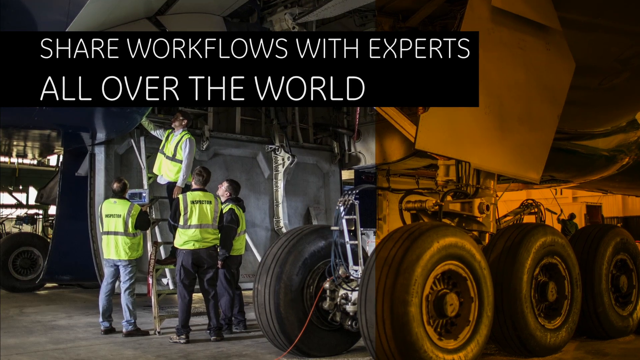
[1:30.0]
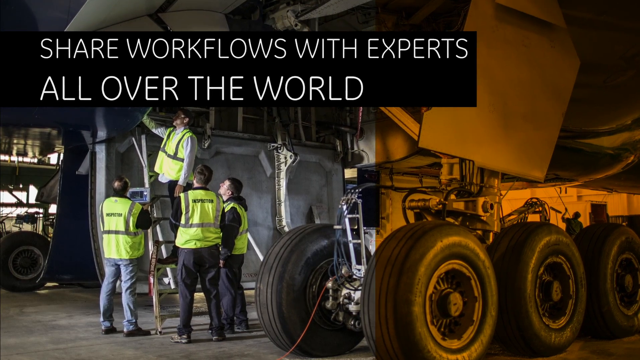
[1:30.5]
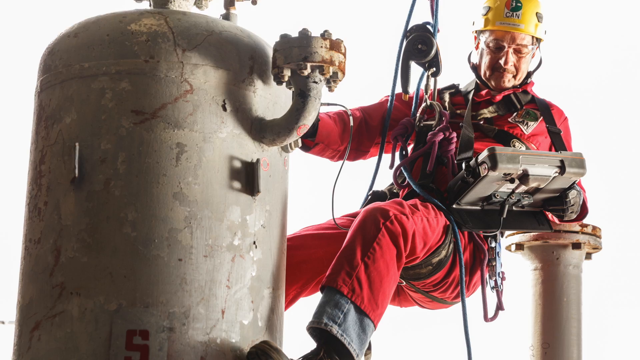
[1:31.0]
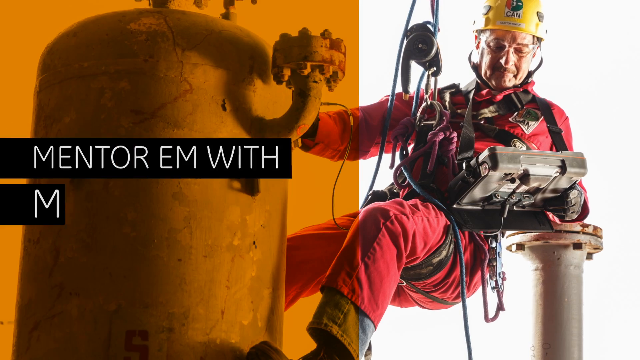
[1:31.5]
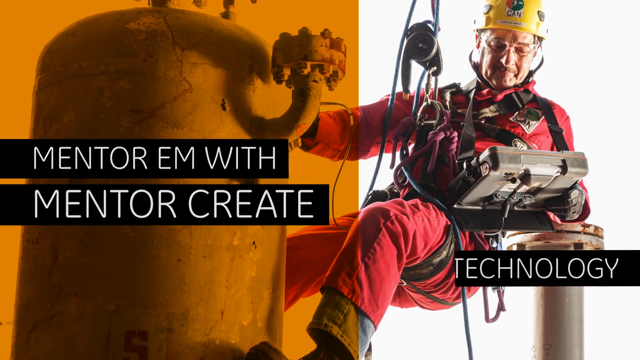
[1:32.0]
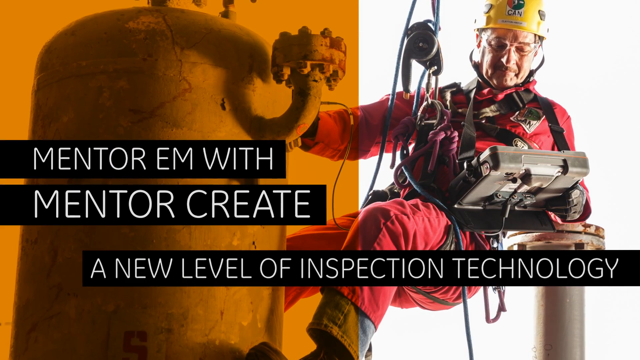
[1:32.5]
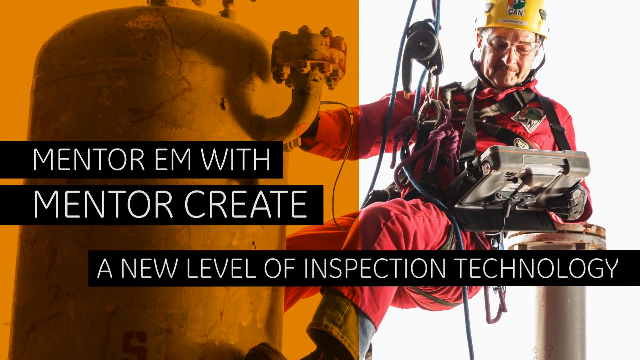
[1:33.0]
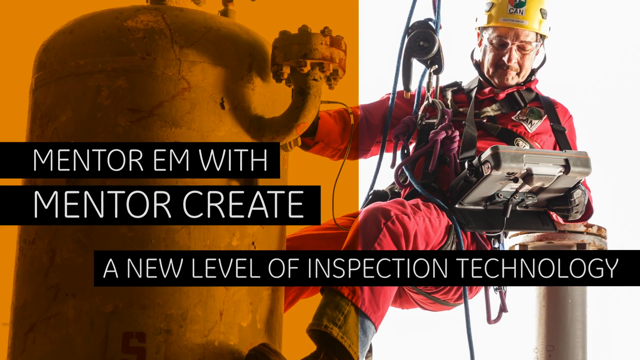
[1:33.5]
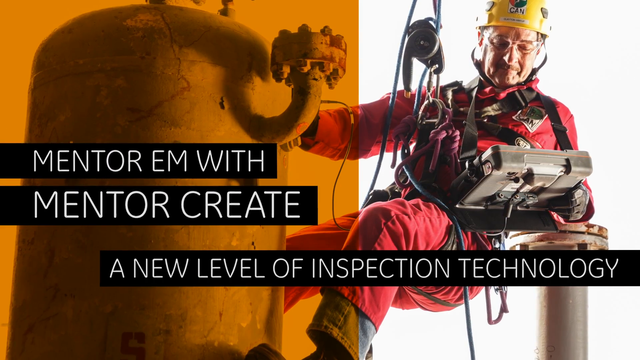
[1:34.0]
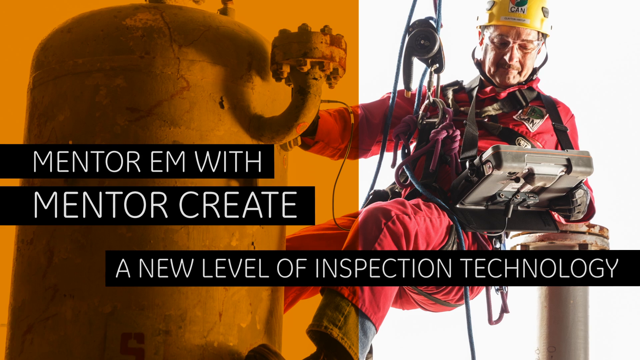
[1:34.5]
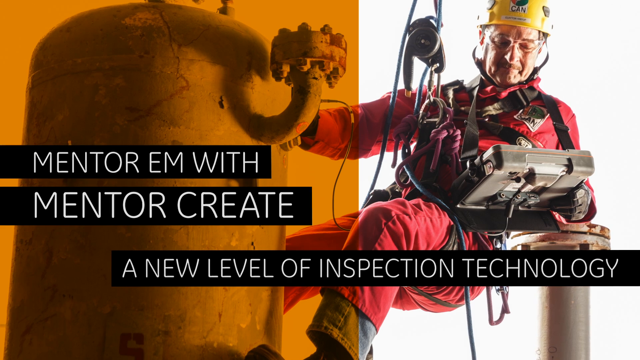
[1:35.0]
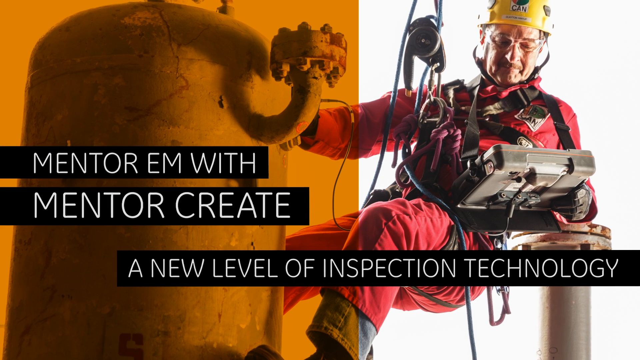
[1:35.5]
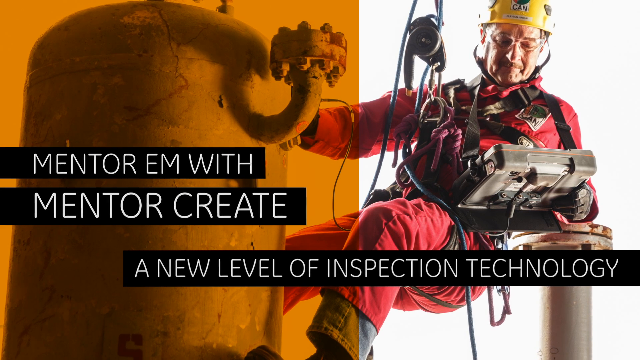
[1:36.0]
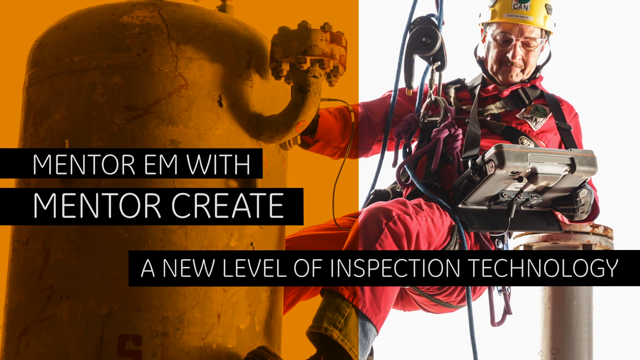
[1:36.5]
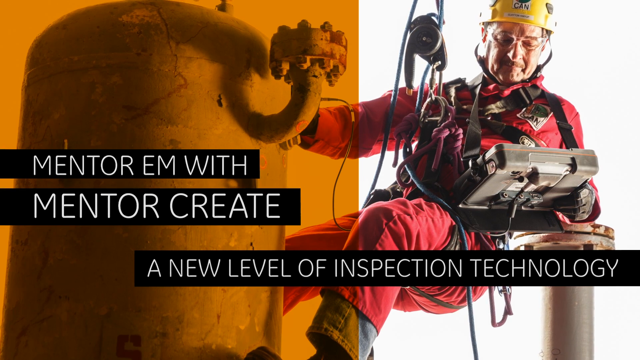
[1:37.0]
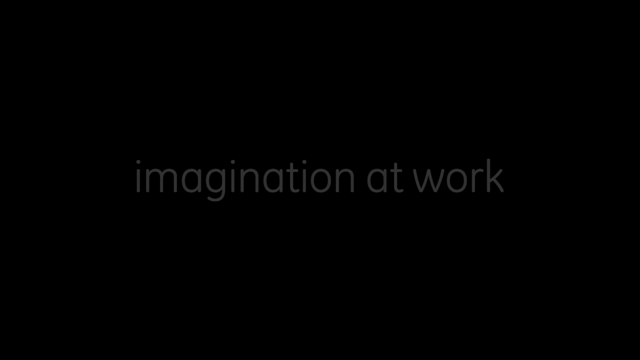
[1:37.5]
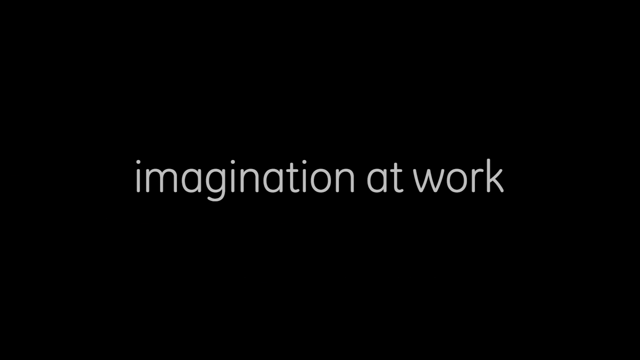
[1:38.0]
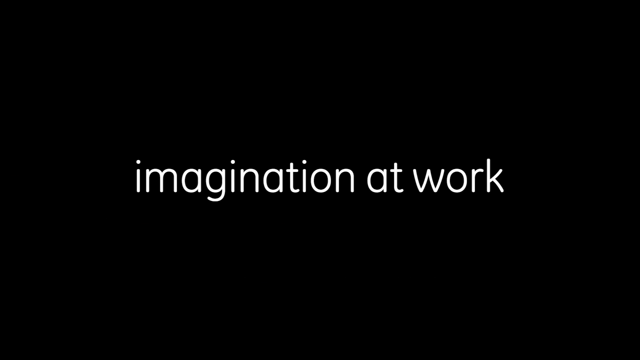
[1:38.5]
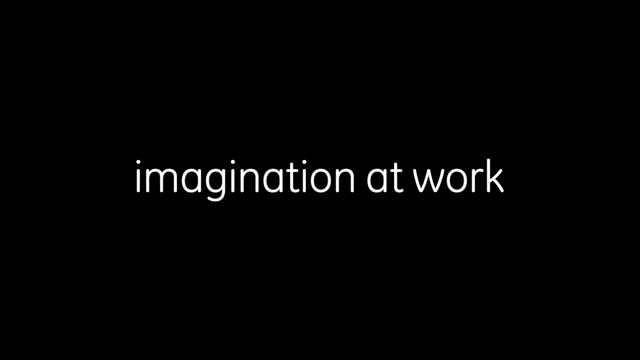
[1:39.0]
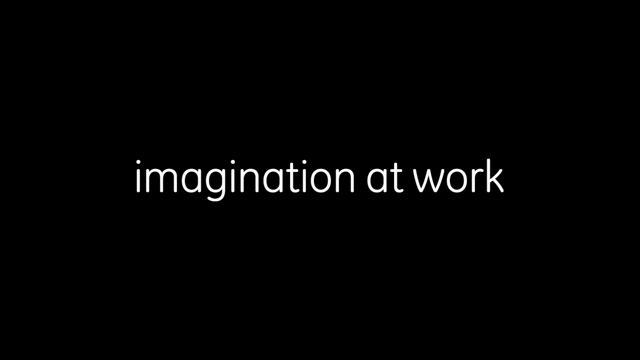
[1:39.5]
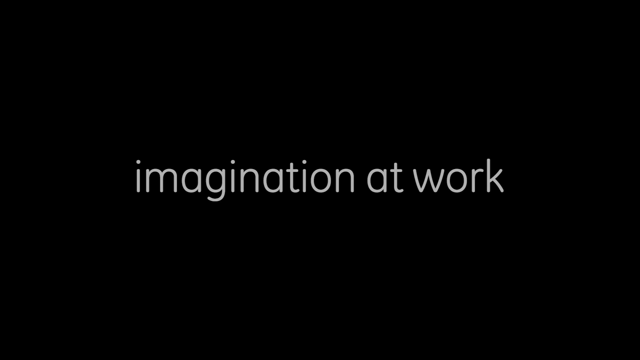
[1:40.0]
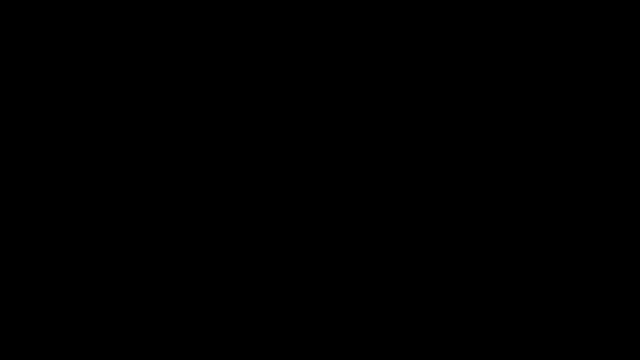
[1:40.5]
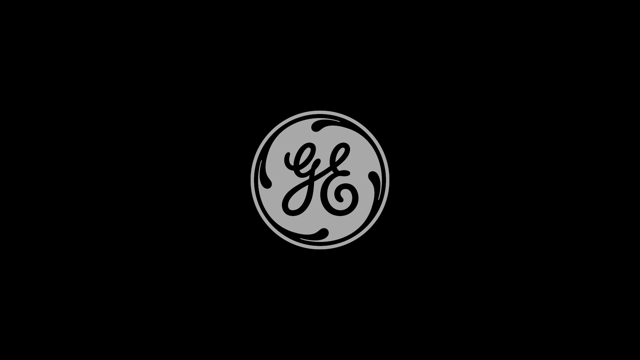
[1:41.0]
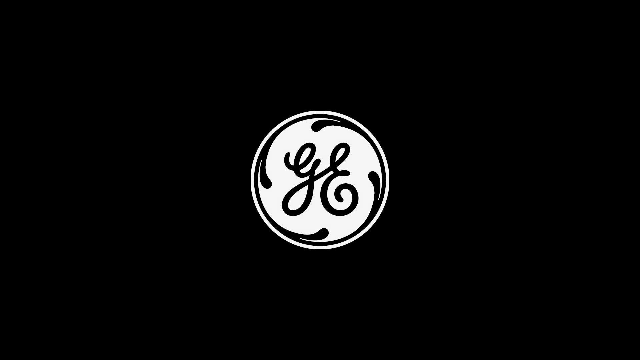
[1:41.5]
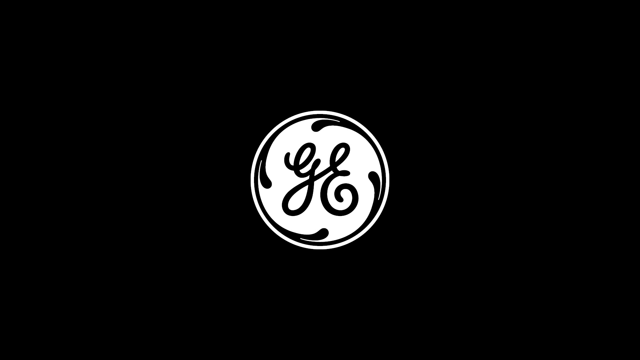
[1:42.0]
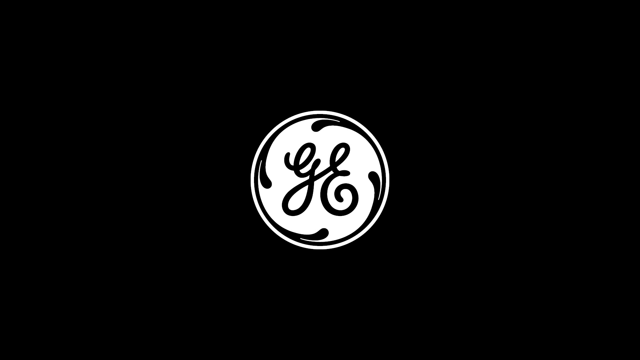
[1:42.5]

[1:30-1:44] The final scene shows "Mentor EM with Mentor Create" and a technician wearing a red jumpsuit, a yellow hard hat and safety glasses. He appears to be an older man in his late 50s or early 60s. He uses the weld inspection device to inspect a weld on a pipe that is high in the air. The device is presented as a new level of inspection technology. "Imagination at Work" and GE appear.